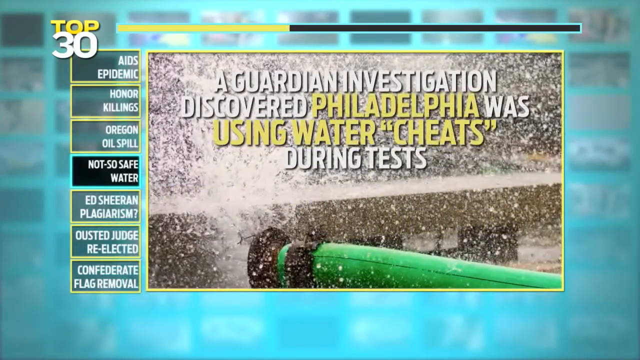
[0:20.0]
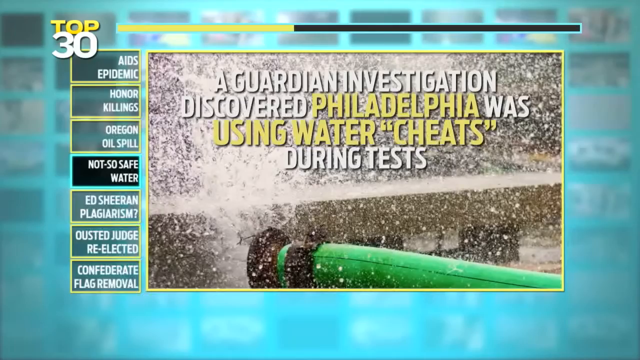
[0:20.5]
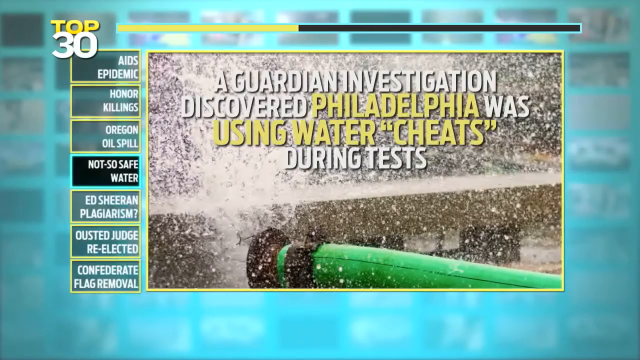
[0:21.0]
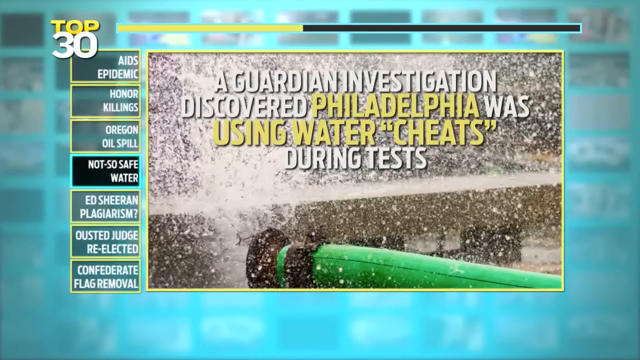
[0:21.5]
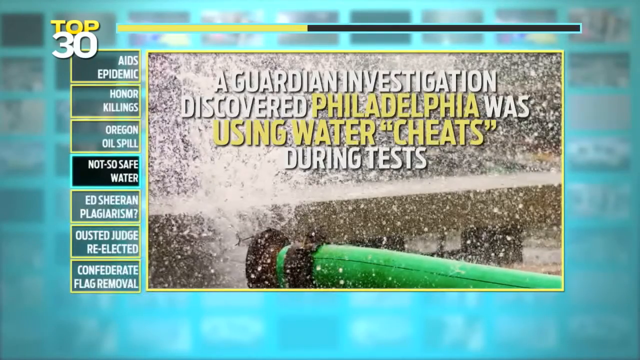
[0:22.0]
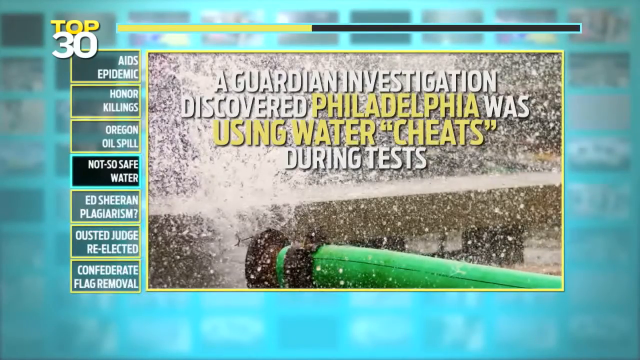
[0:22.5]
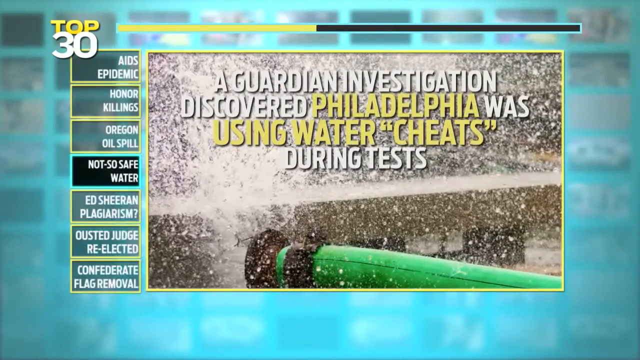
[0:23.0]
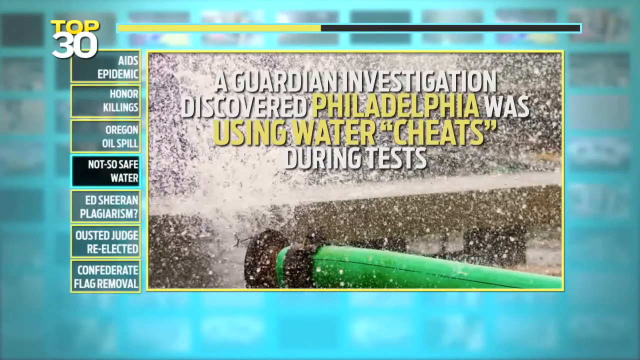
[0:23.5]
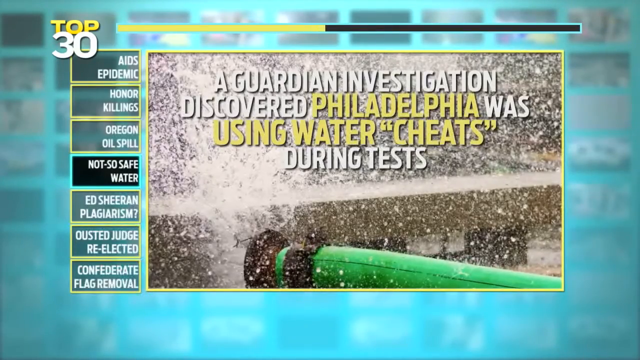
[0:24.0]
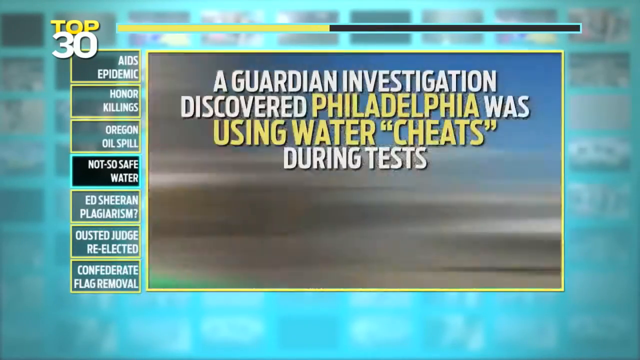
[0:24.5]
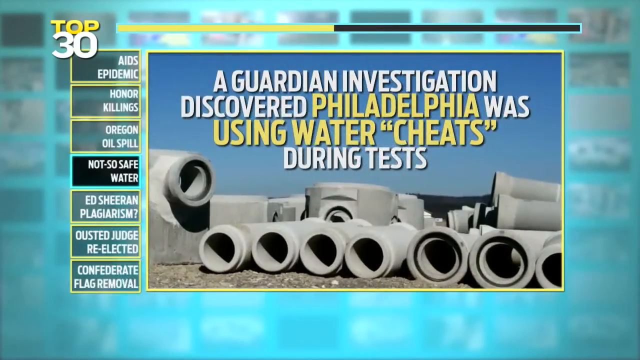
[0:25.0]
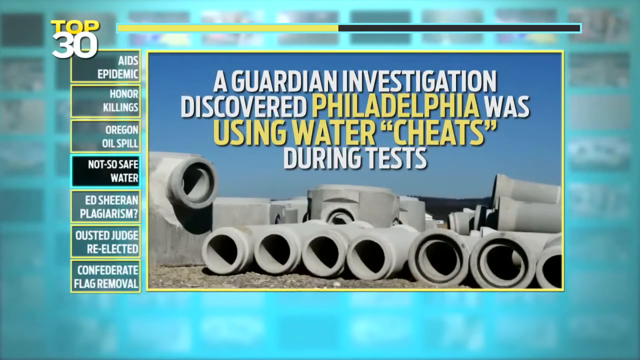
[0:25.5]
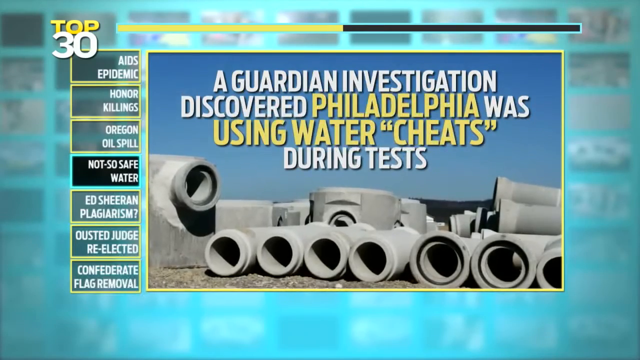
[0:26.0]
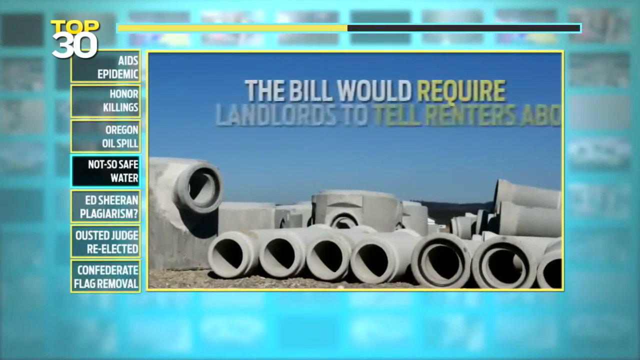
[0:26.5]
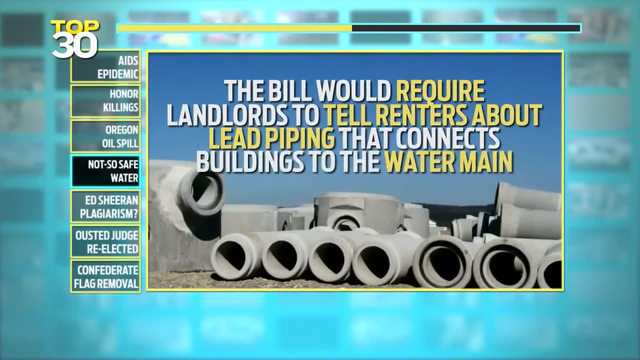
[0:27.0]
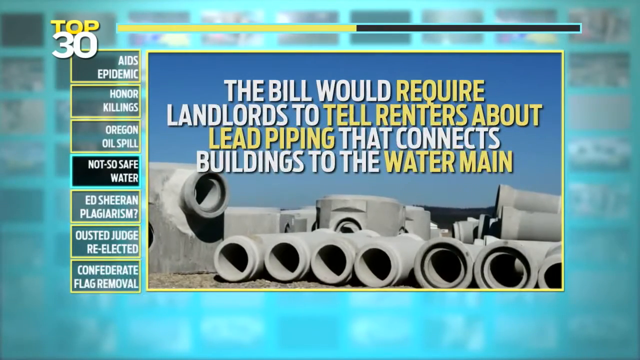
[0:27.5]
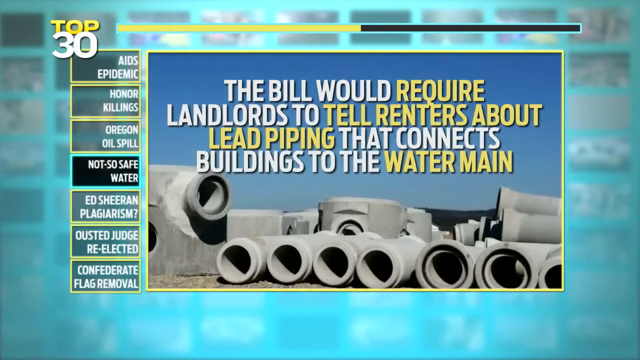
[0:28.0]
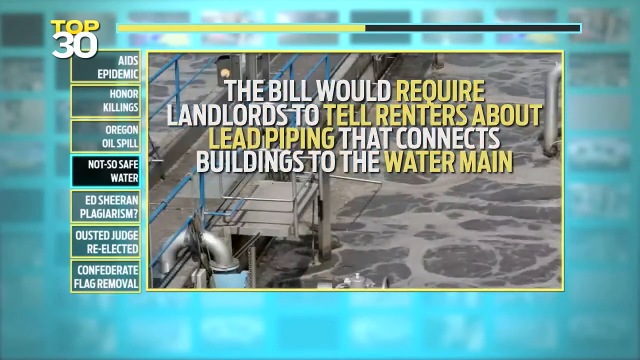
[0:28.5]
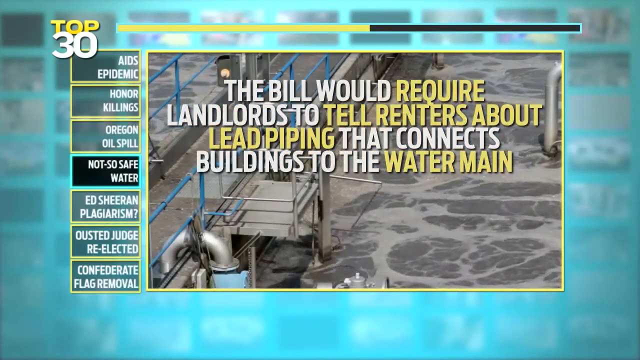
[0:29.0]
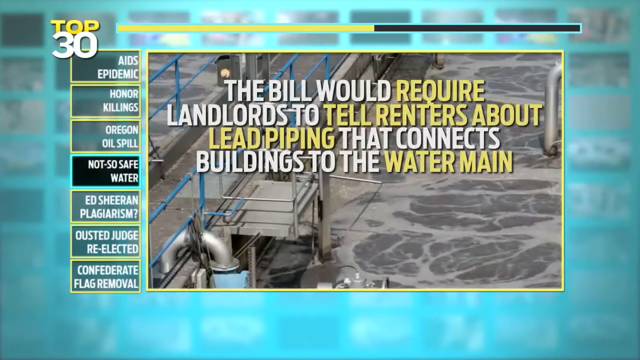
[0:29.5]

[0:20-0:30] A photograph shows what looks like a hose with a lot of water spraying out of its end. Next comes a photograph of several concrete pipes laying on the ground, as if ready to be installed underground. Text reads "a Guardian investigation discovered Philadelphia was using water cheats during tests. The bill would require landlords to tell renters about lead piping that connects buildings to the water main." Video footage then shows a walkway going over some water, which appears to be bubbling and boiling underneath the walkway.